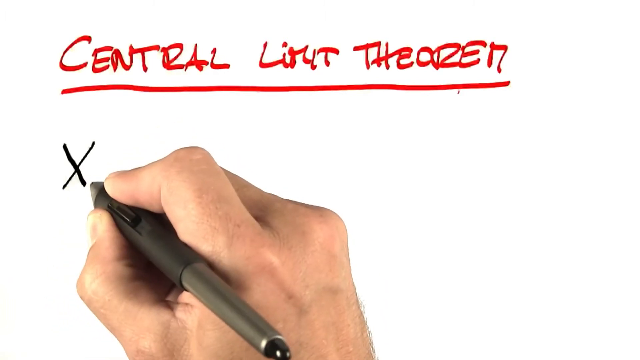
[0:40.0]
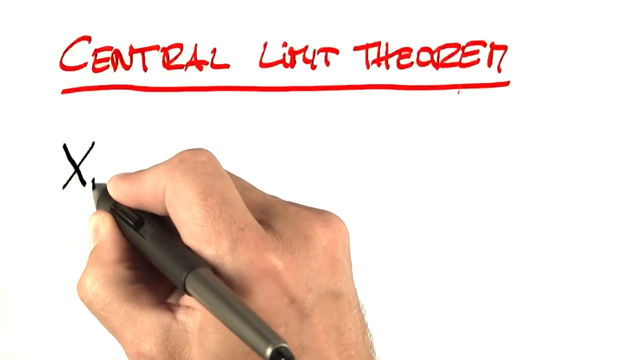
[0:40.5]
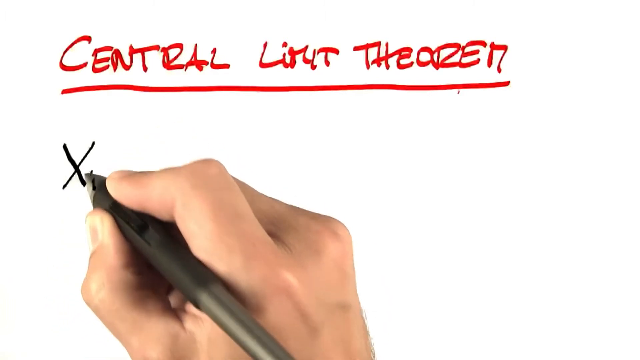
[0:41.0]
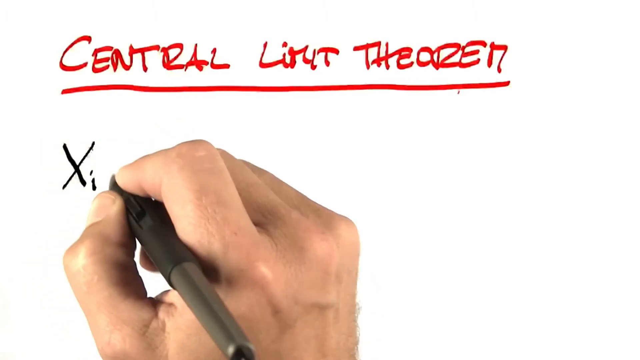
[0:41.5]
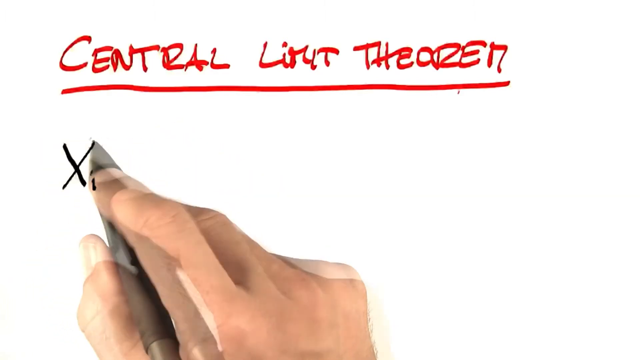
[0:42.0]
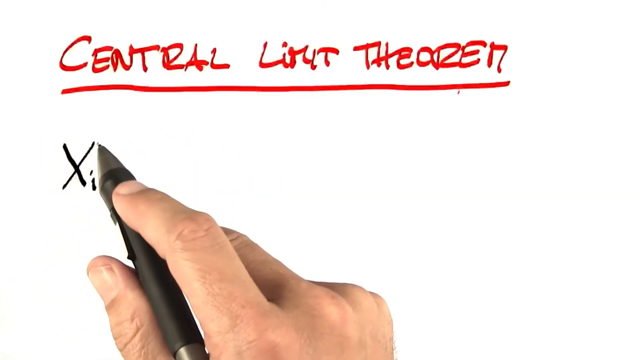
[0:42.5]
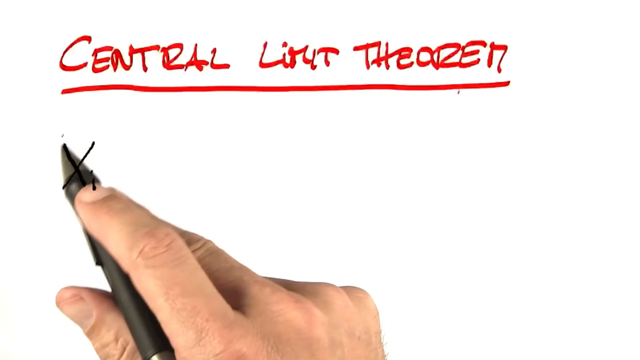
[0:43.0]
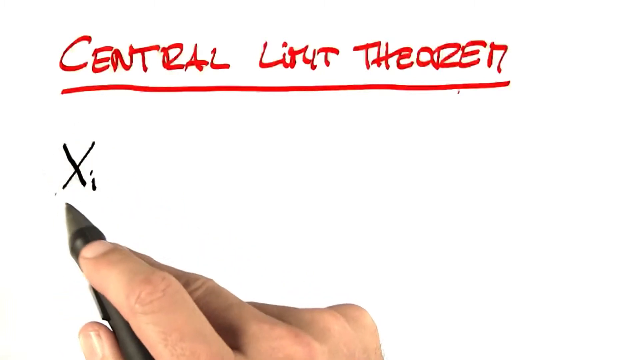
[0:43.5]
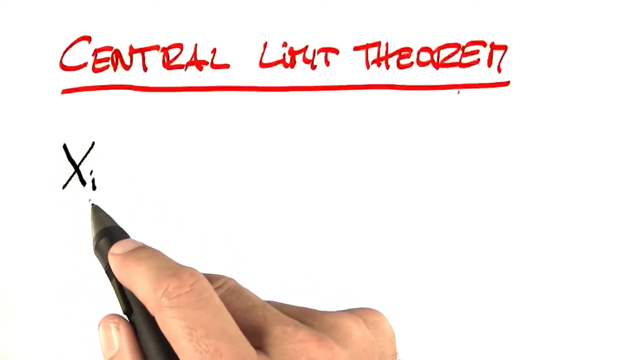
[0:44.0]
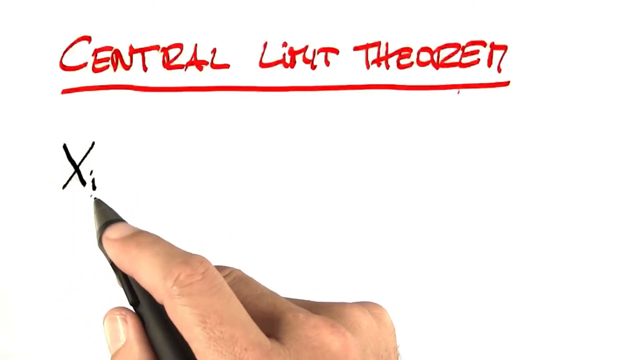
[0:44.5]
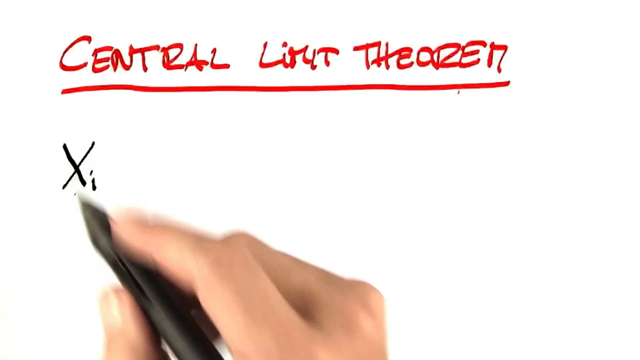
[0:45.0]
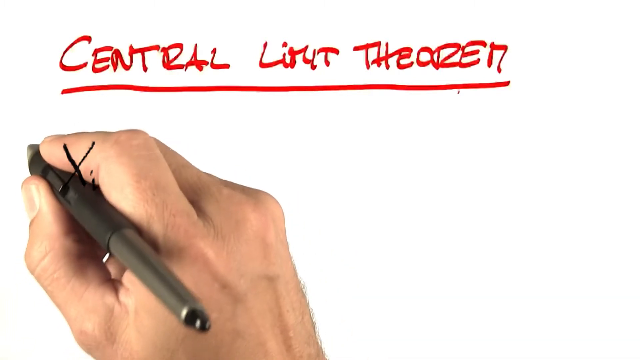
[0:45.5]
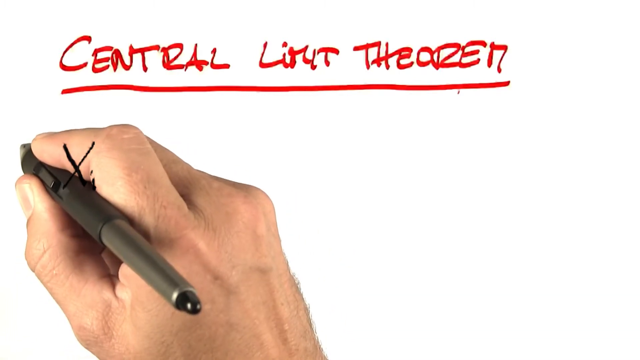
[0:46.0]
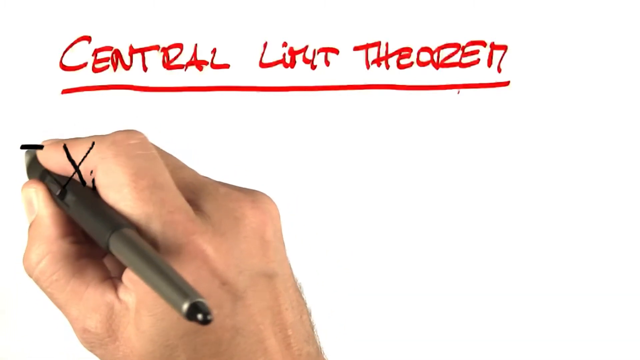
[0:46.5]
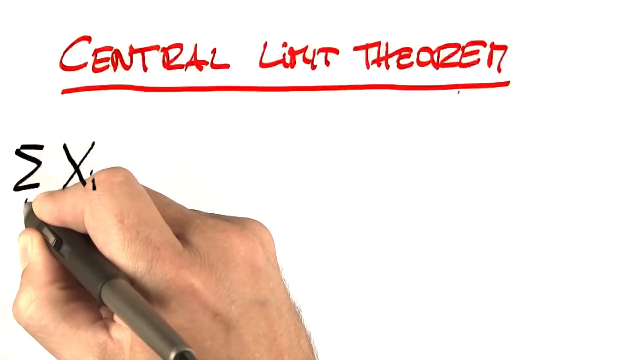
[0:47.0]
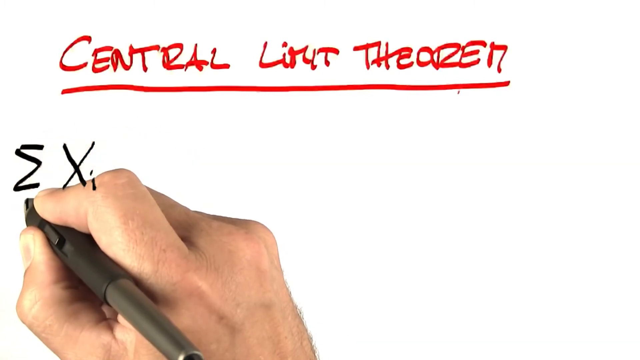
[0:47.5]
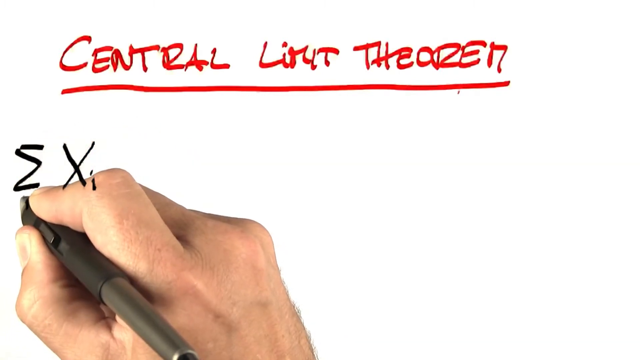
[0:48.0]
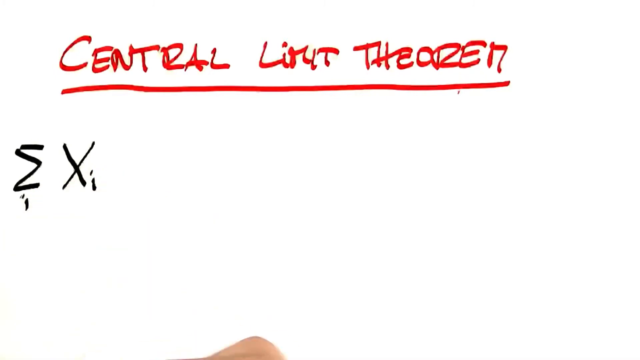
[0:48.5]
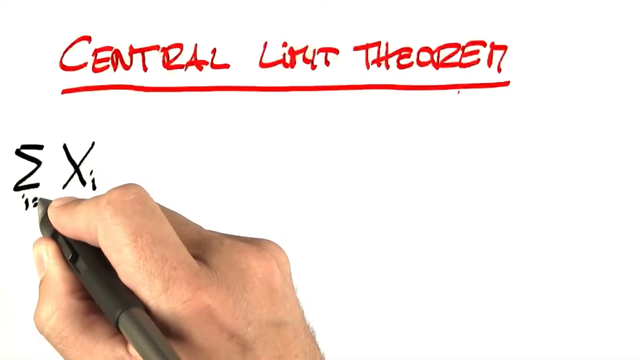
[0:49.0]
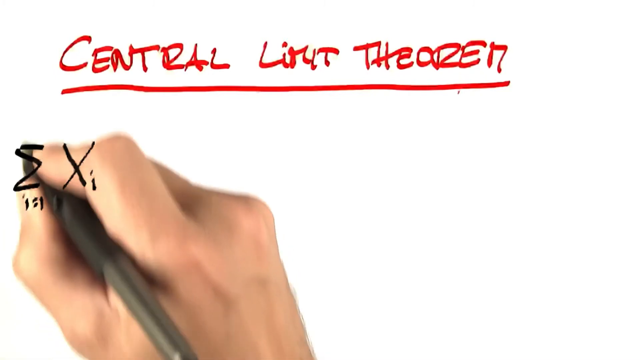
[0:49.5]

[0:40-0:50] On a white background, "Central limit theorem" is handwritten at the top in red pen and black letters, underlined in black pen. Someone's right hand appears holding a pen. In black, it writes a capital letter X with a small letter i next to it, and circles the Xi. Moving to the left of that, it writes a capital epsilon, the Greek symbol. Below the epsilon, in very small letters, it writes "i = i", and then it writes a dot above the epsilon.